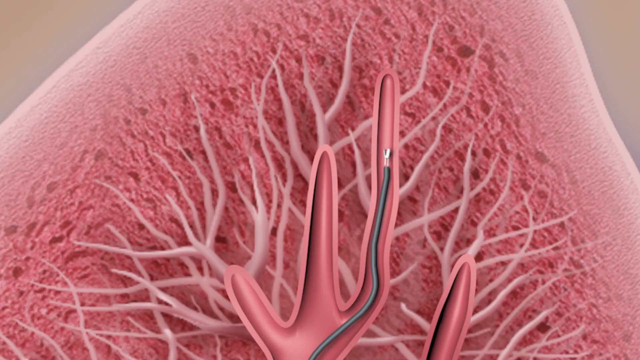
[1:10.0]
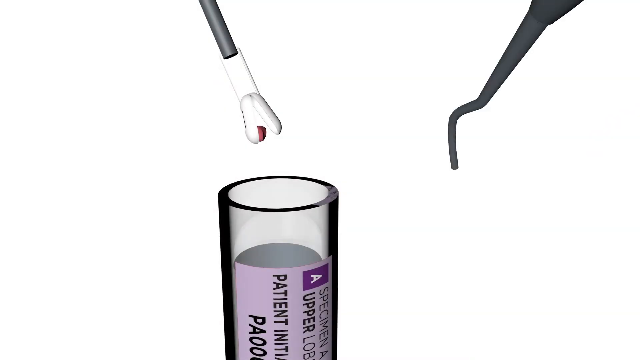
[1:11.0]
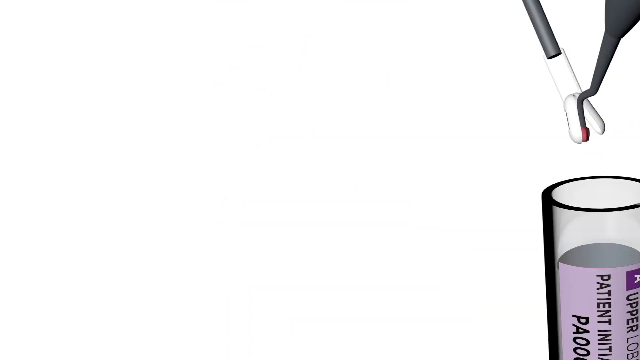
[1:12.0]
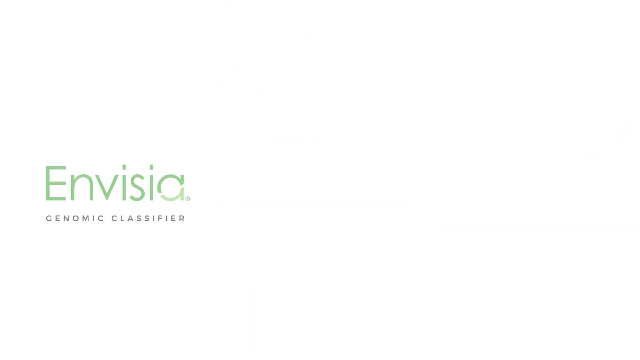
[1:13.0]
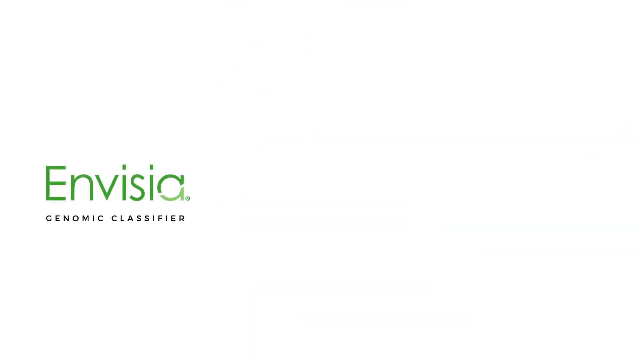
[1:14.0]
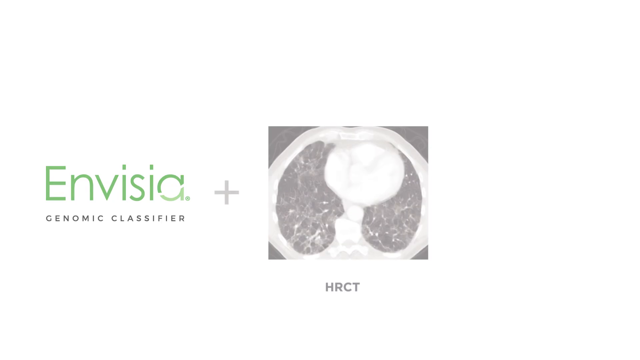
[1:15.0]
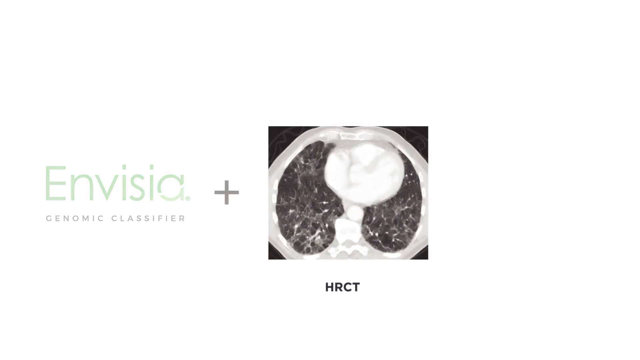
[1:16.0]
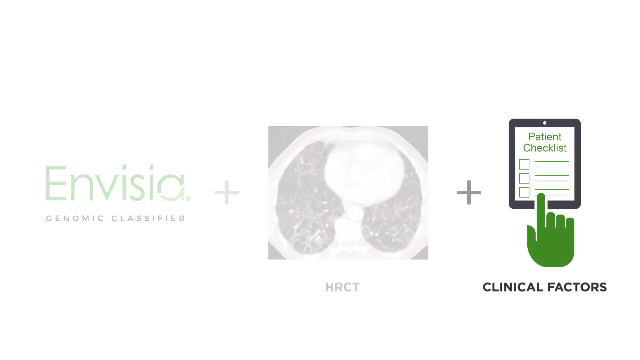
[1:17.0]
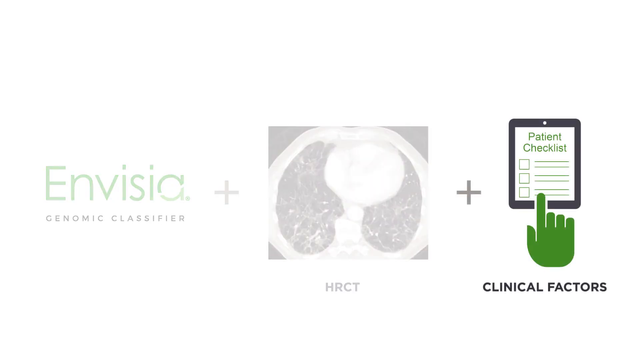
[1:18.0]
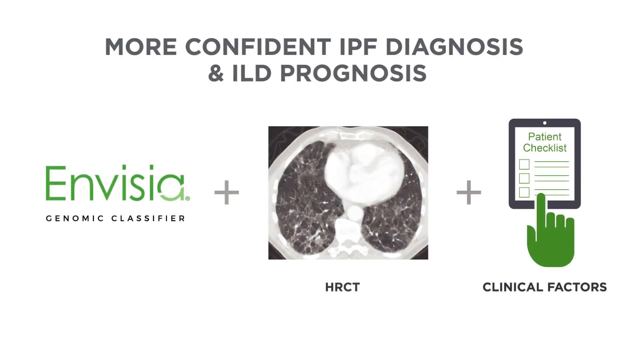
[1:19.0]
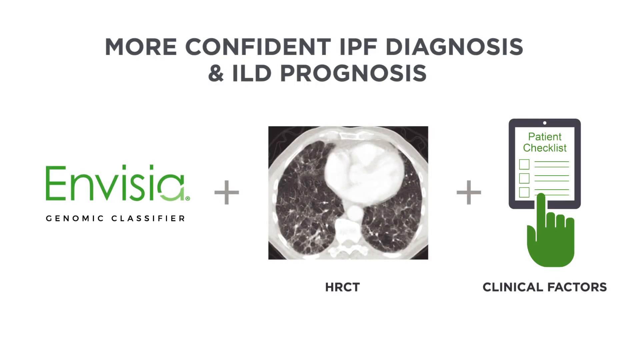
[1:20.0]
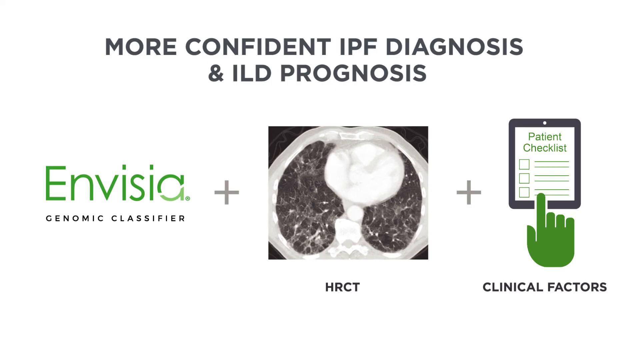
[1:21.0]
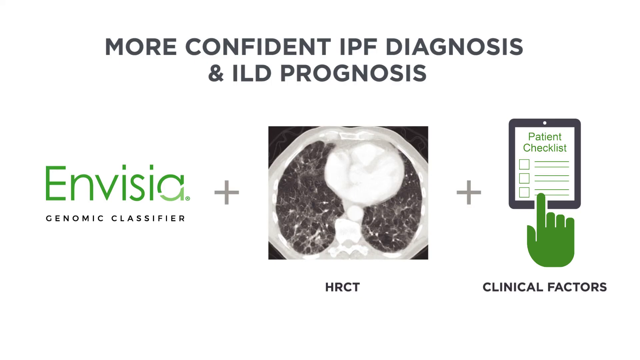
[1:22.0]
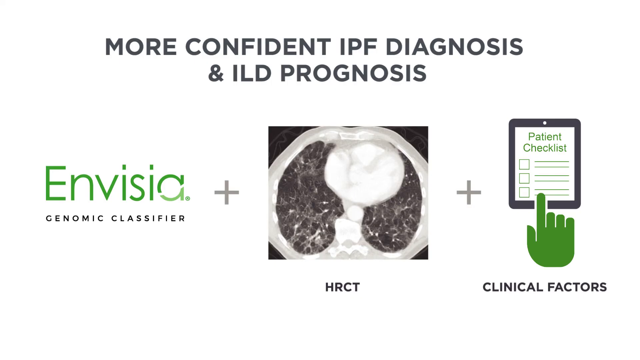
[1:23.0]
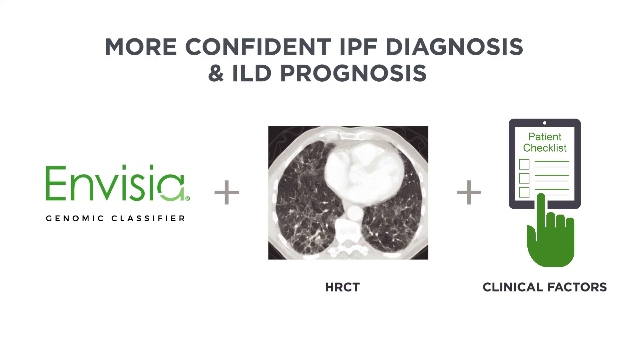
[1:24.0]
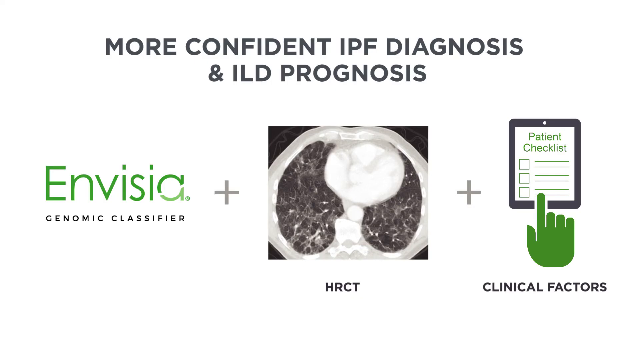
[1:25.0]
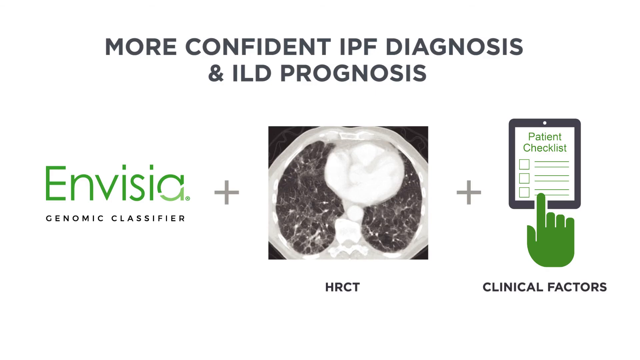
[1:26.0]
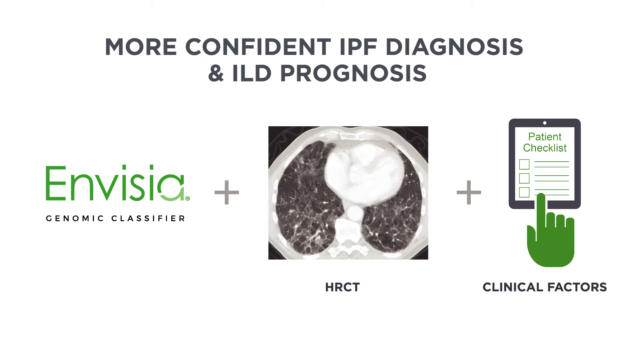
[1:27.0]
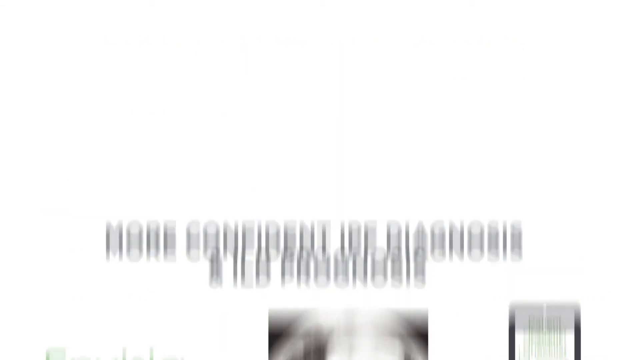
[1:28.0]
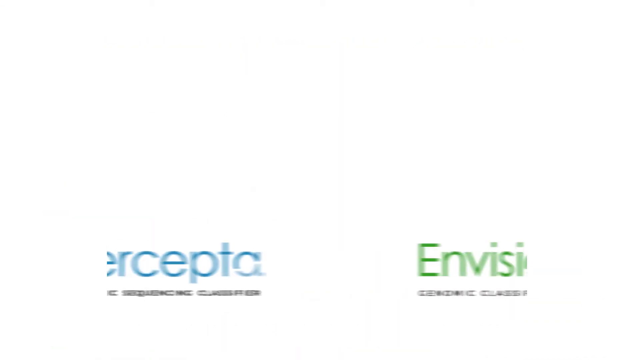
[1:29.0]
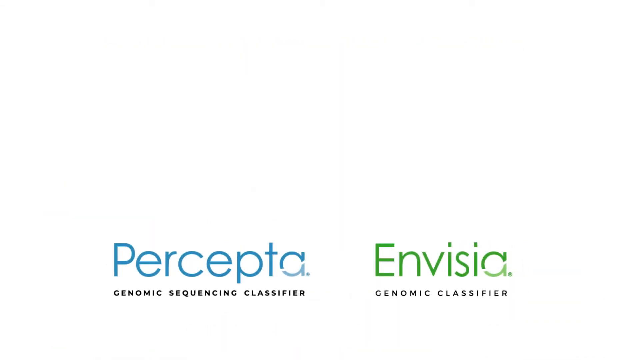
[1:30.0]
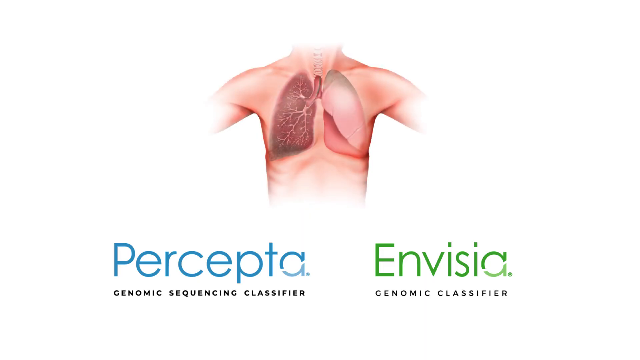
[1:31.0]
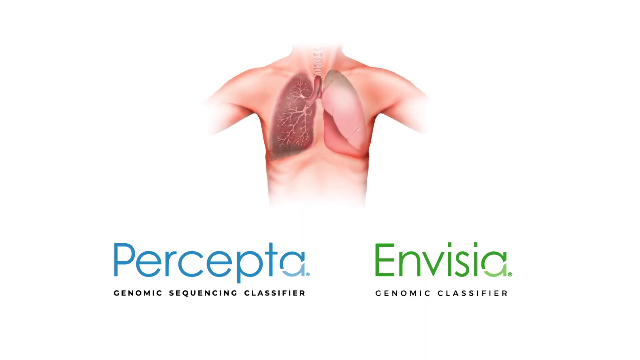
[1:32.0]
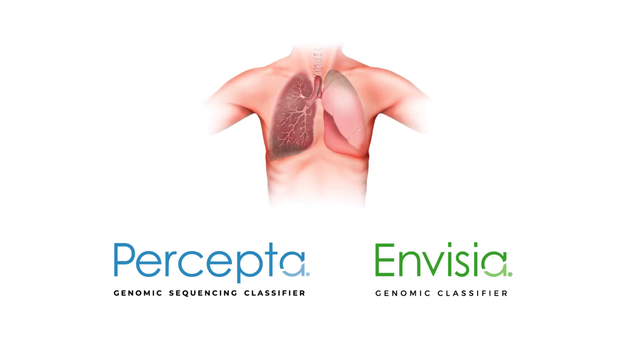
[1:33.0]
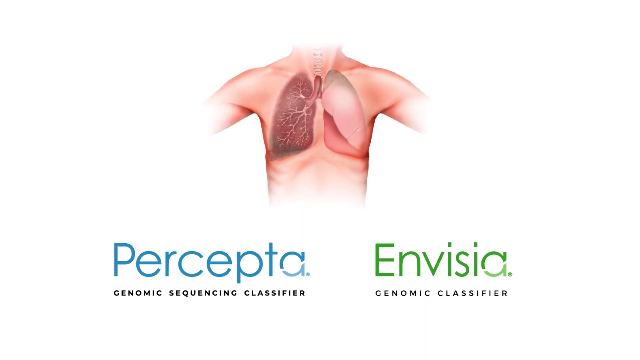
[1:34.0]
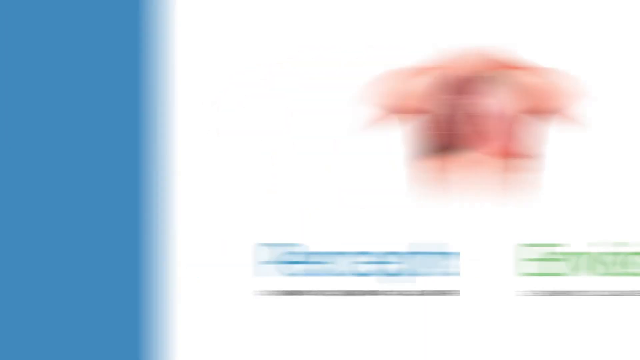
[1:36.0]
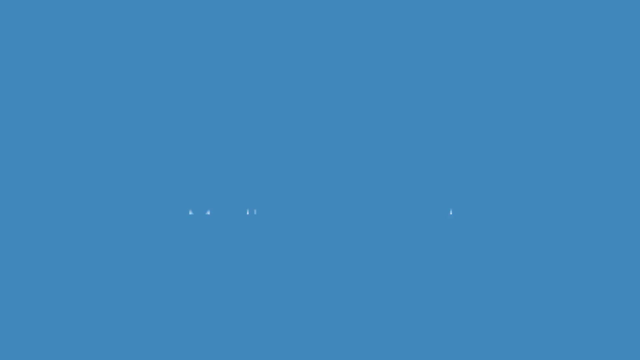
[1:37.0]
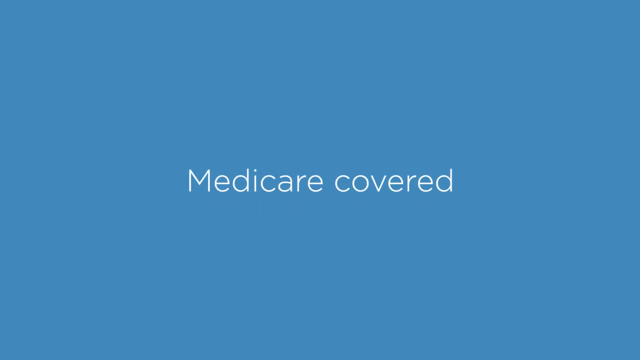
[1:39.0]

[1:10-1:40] A close-up shows a cross-section of a lung with various blood vessels and veins moving through it. In one of the veins is the small black tube. The scene changes to a medical vial with a purple label; the only legible word is "patient." The tube has been extracted from the lung, and at its end is one small red blob, which a black piece of medical equipment scrapes into the tube. The next scene shows the word "Invisia" in green on the left-hand side, with "genomic classifier" below it in black. That fades and a plus sign appears. In the center, a square reads "HRCT"; the square is an image of a lung scan. Another plus sign appears with the words "clinical factors," alongside a symbol of a hand tapping with the right forefinger on a screen that reads "patient checklist." The scene returns to an illustration of a human torso showing the cross-section of the left lung and the right lung in full. On the left-hand side of the screen, "Percepta" appears in blue with "Genomic Sequencing Classifier" beneath it in black; on the right-hand side, "Invisia" appears with "Genomic Classifier" below it in black. A blue screen then appears with the words "Medicare Covered."